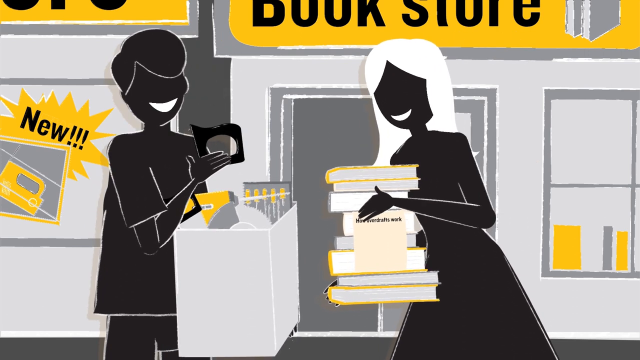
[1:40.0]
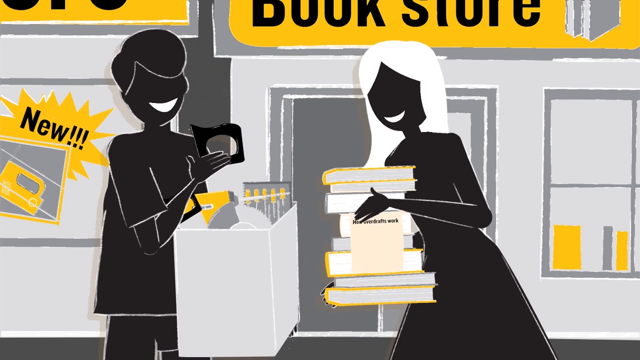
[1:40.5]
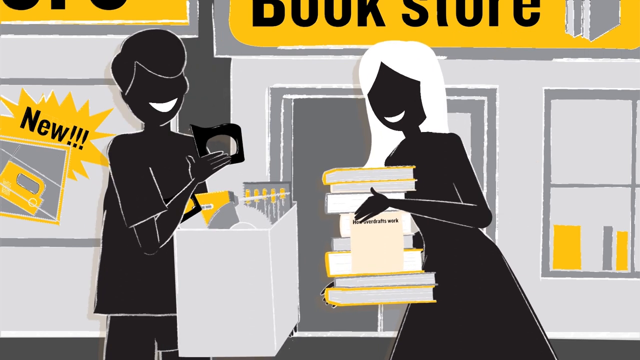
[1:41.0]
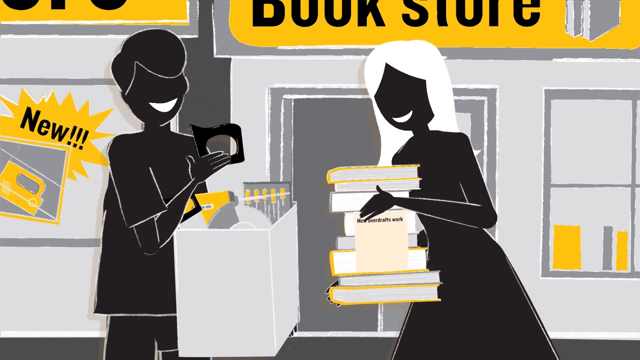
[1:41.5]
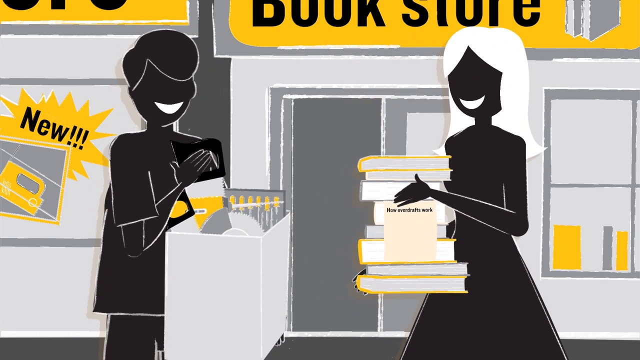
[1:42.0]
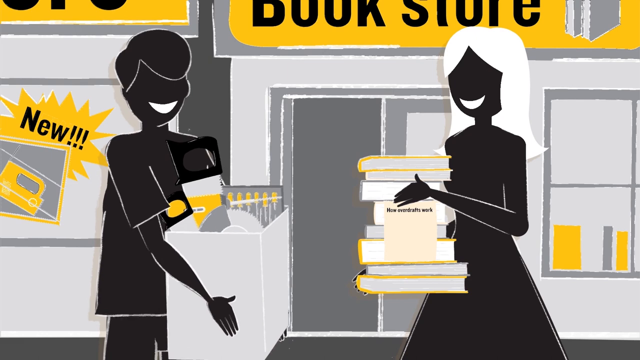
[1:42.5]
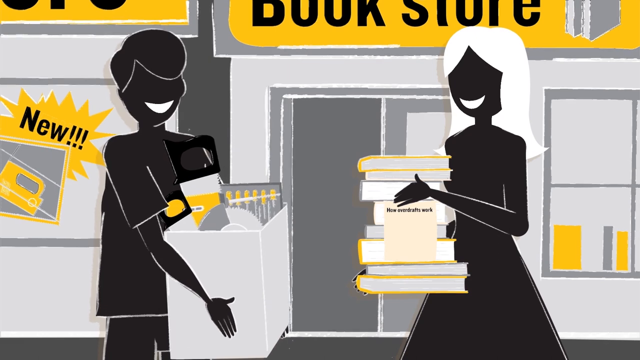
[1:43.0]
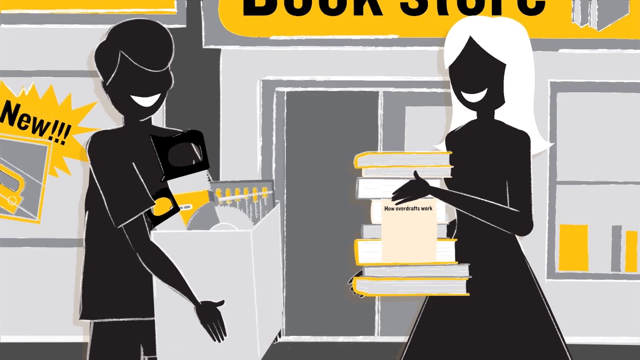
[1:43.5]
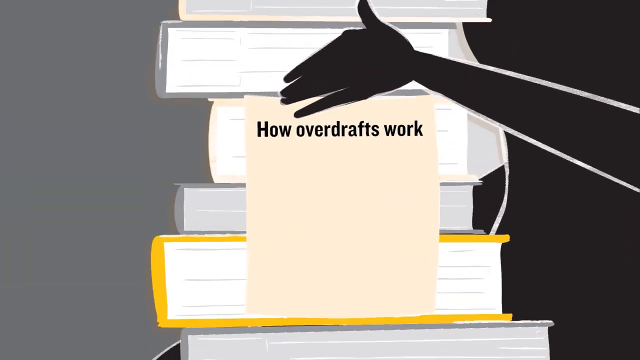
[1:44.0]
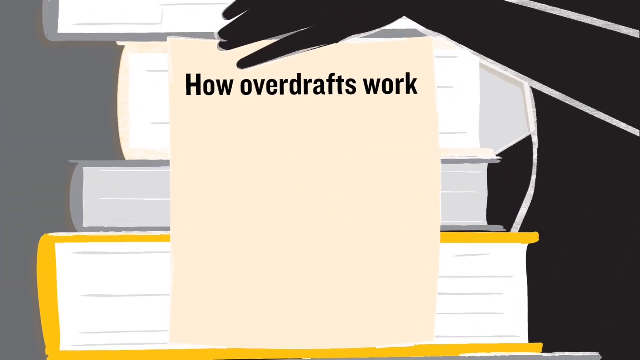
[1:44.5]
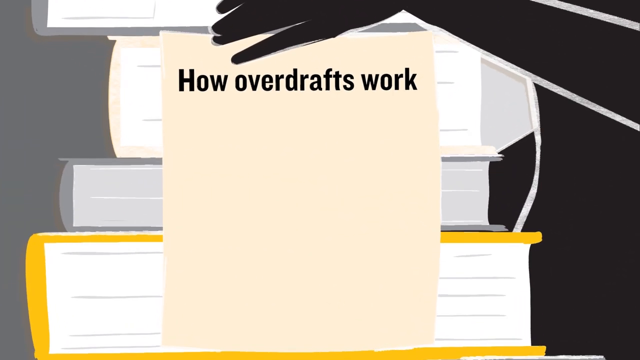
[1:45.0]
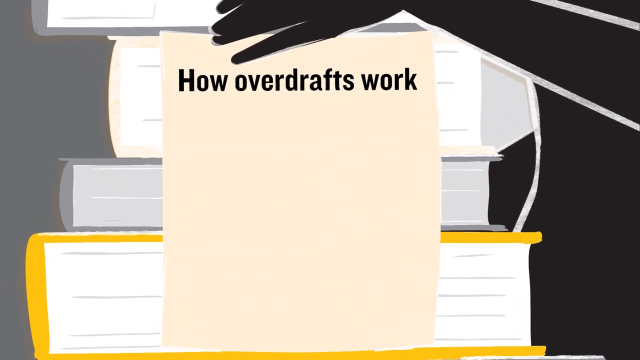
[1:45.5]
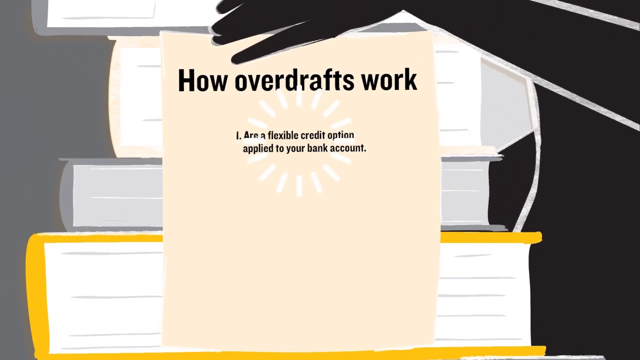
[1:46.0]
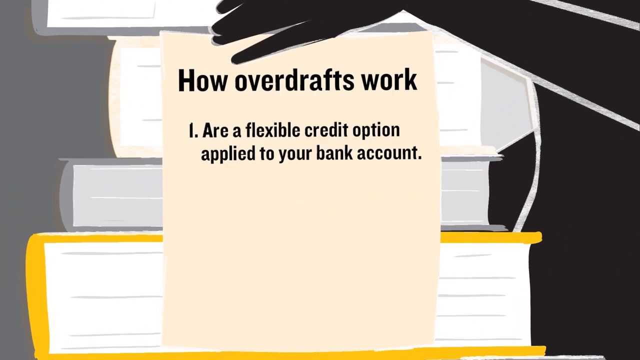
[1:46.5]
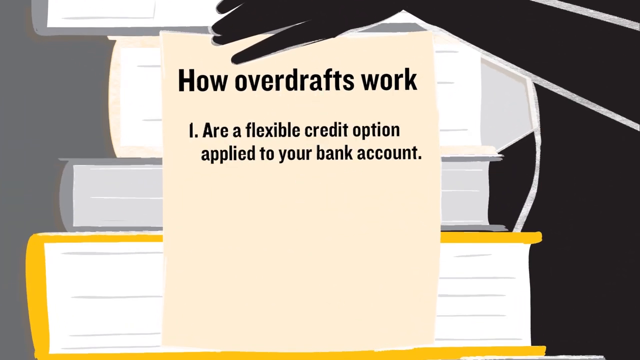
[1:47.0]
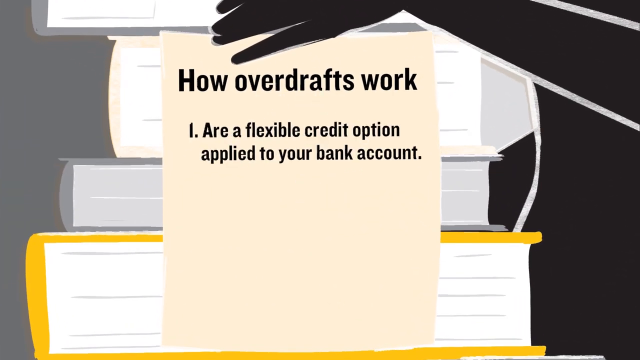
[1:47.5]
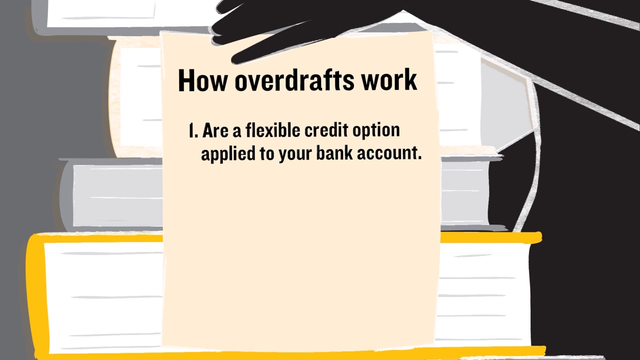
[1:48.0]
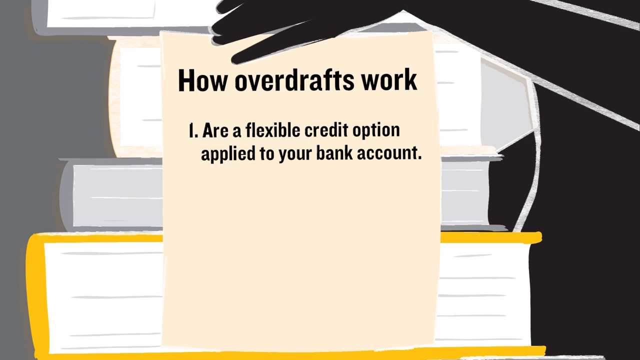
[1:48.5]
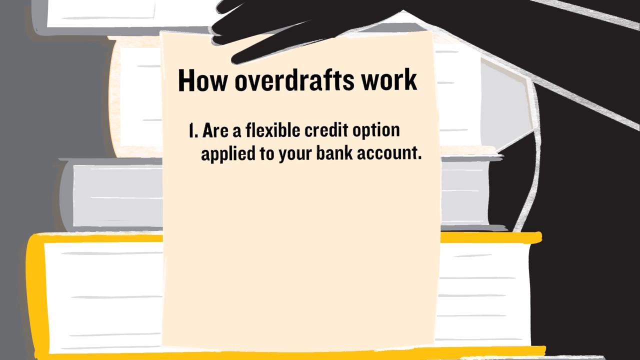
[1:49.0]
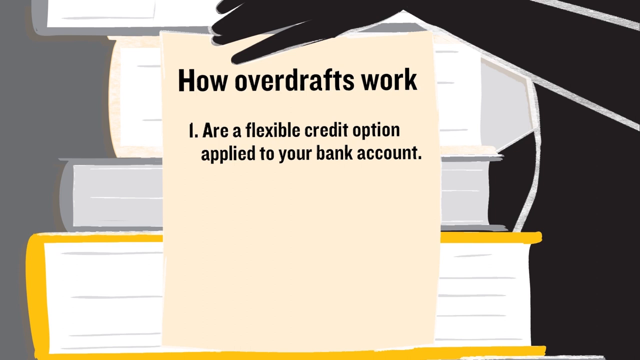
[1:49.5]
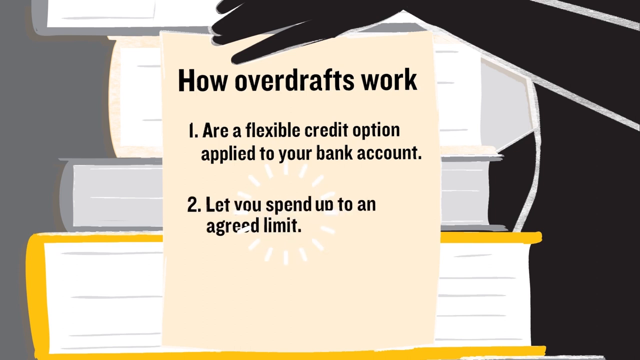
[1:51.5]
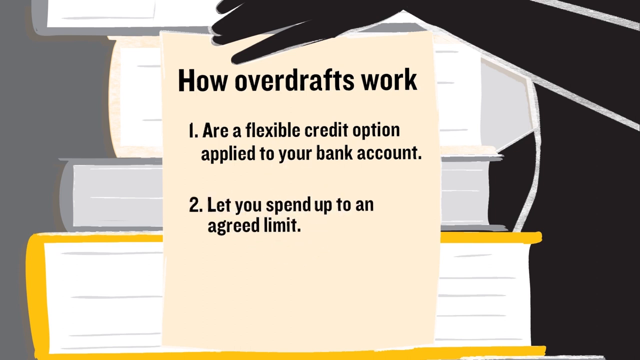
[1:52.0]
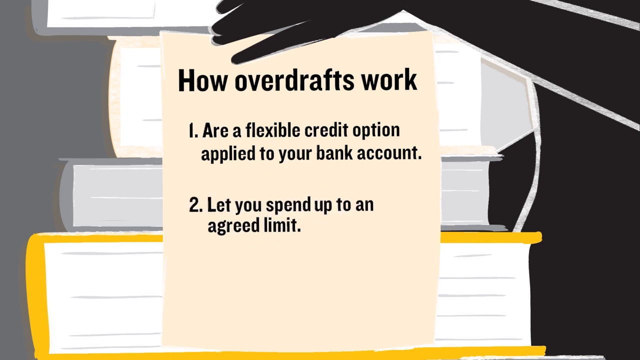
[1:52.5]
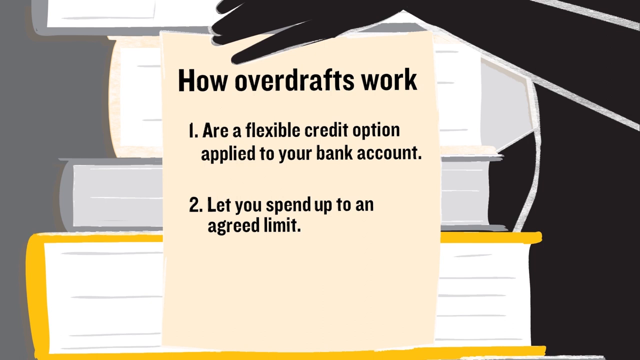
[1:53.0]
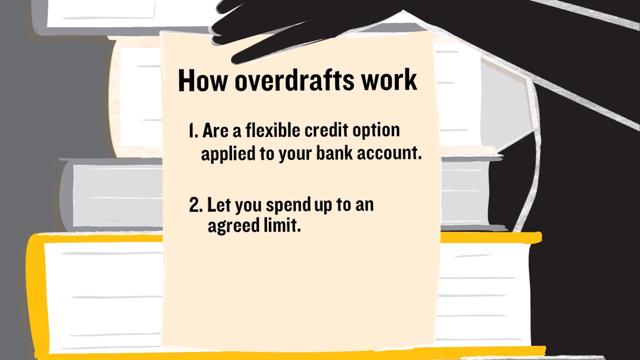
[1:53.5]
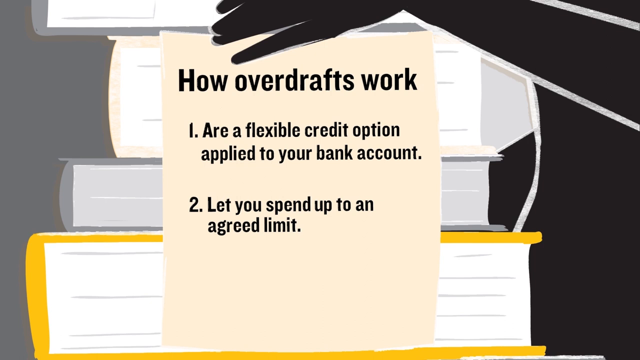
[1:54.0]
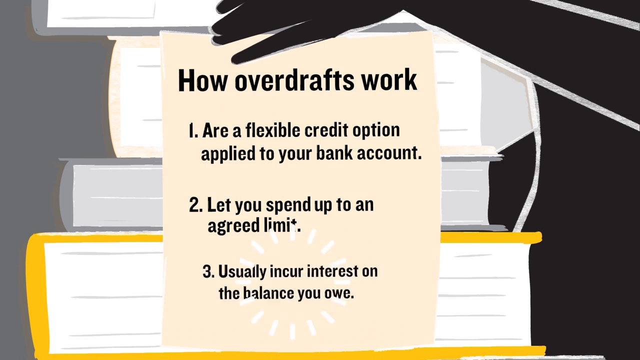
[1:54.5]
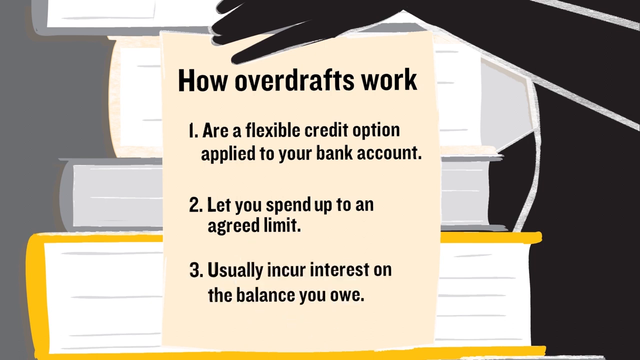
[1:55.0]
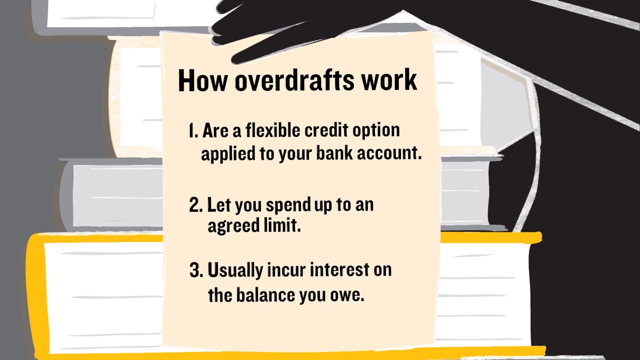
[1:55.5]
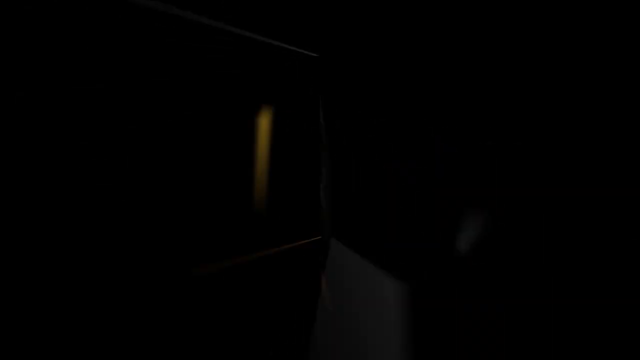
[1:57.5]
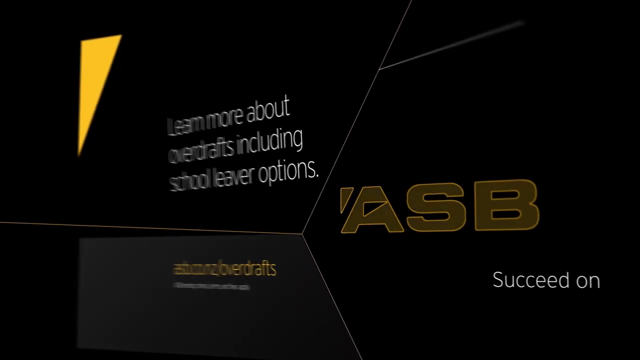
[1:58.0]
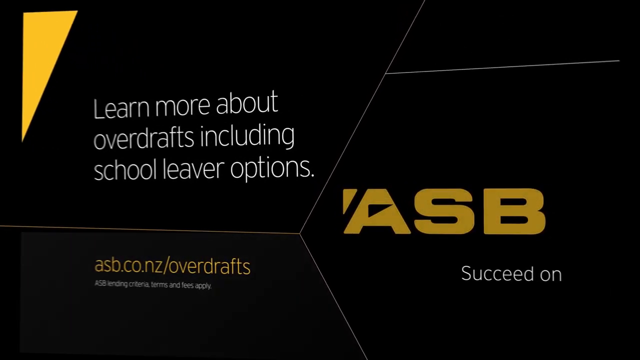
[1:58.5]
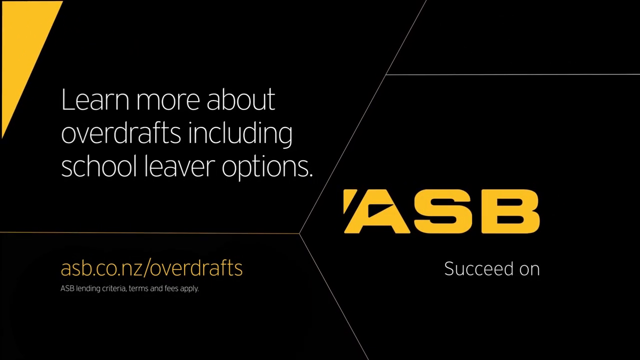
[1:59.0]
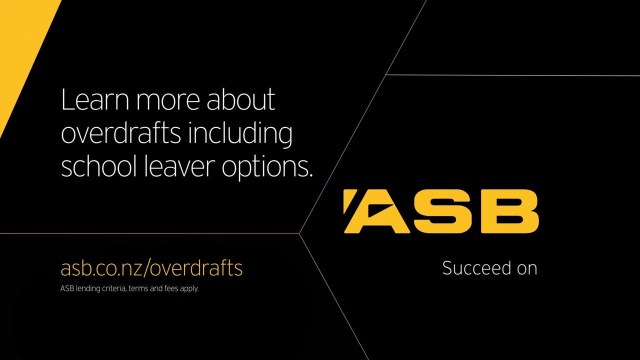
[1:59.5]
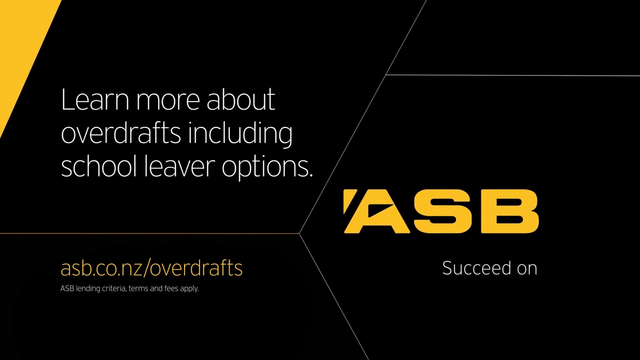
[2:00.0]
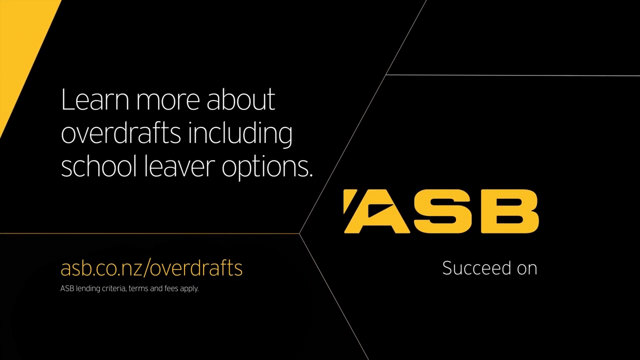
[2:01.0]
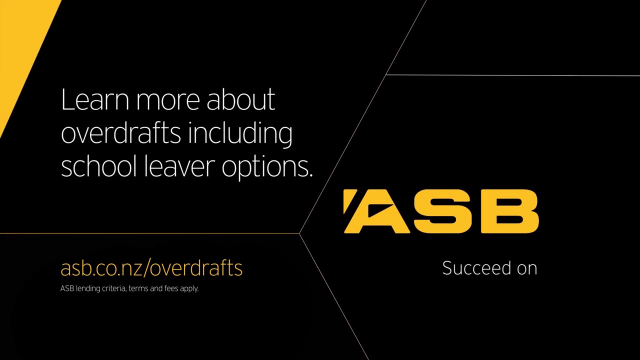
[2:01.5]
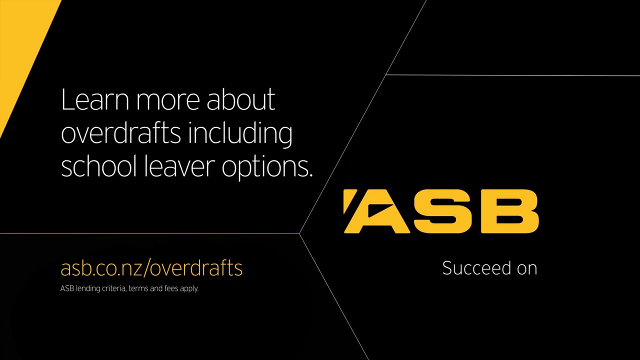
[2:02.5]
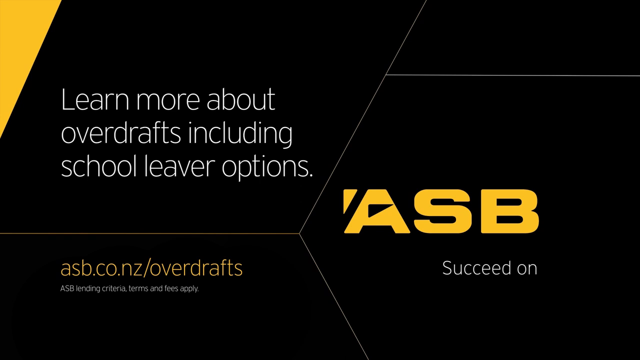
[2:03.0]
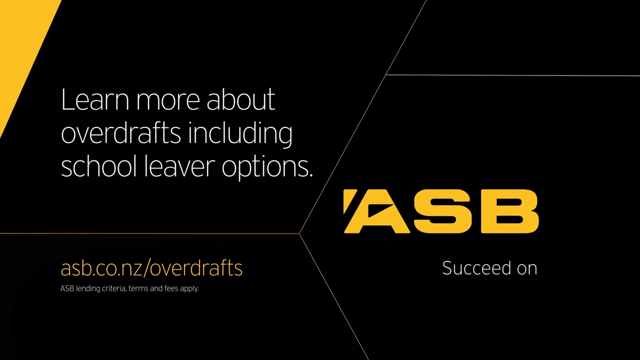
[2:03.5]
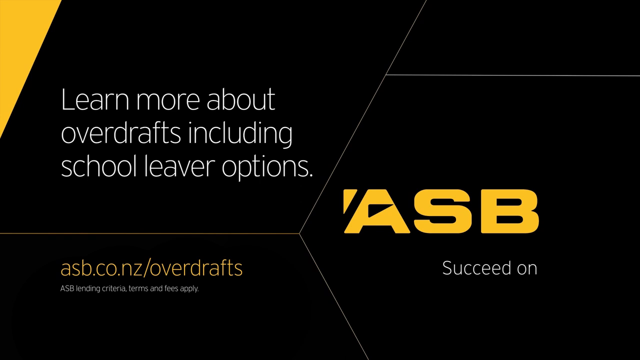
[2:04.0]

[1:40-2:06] On-screen points list the features of an overdraft, including "it lets you spend to an agreed limit", followed by text reading "learn more about overdrafts including school leaver options".